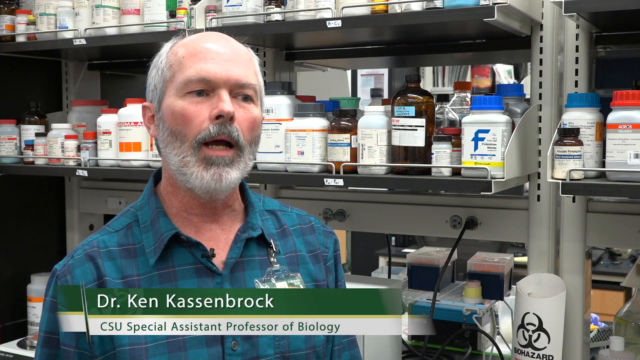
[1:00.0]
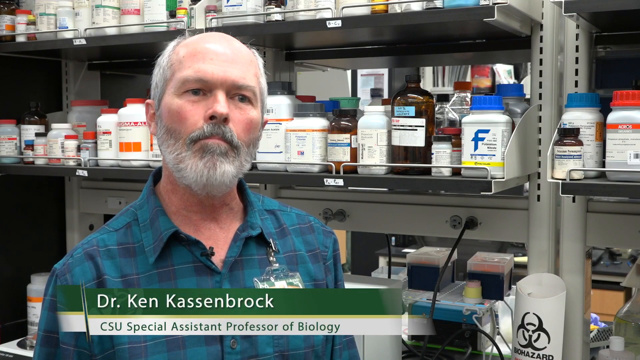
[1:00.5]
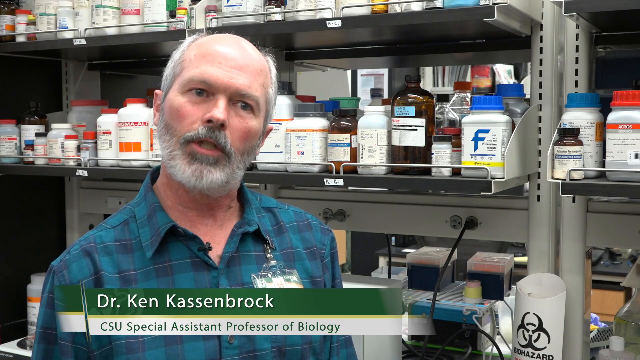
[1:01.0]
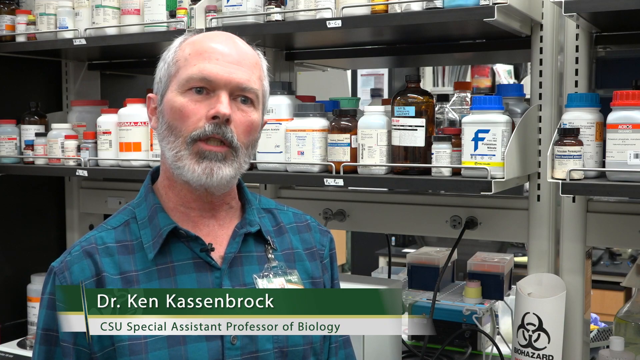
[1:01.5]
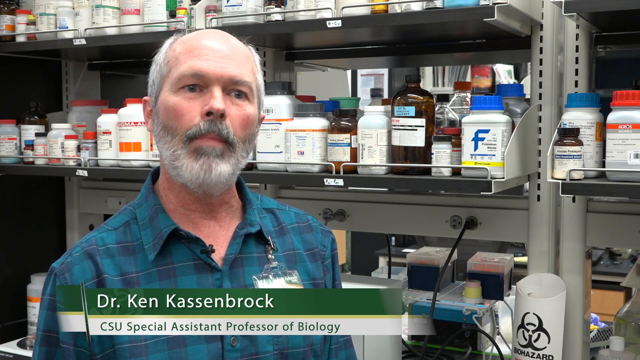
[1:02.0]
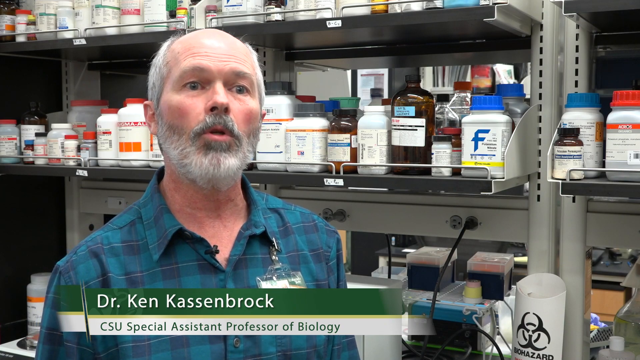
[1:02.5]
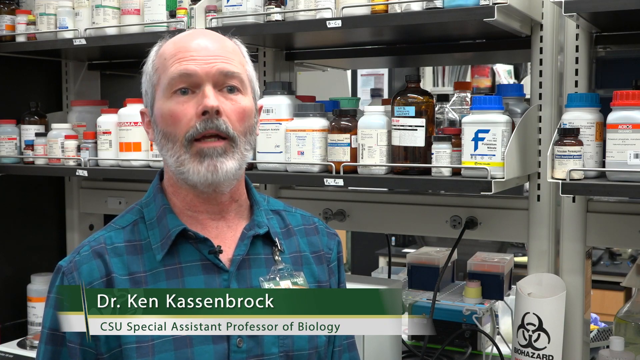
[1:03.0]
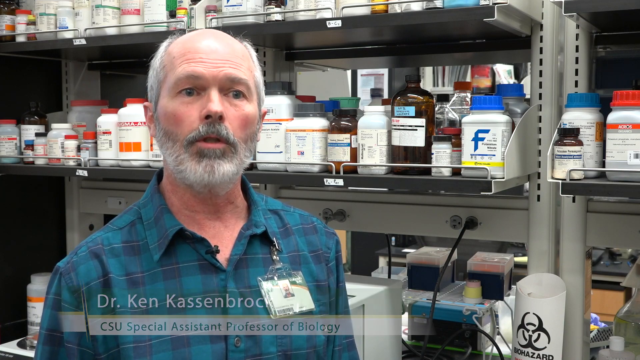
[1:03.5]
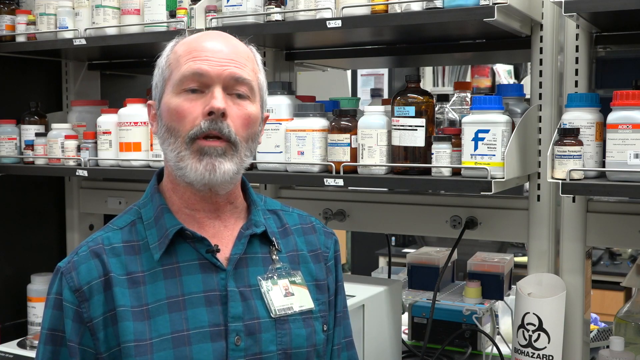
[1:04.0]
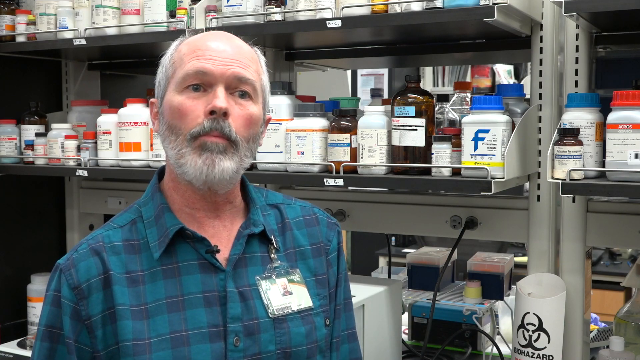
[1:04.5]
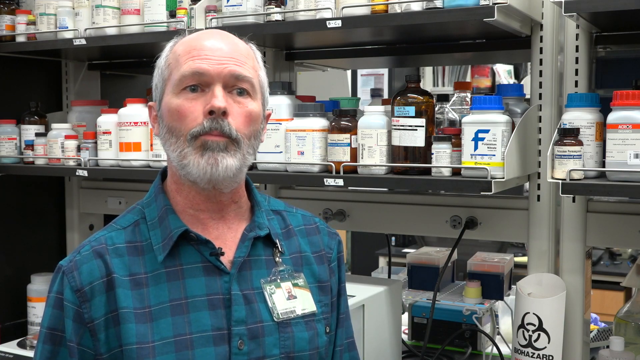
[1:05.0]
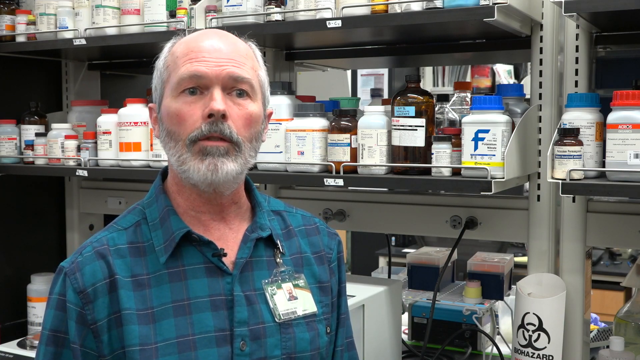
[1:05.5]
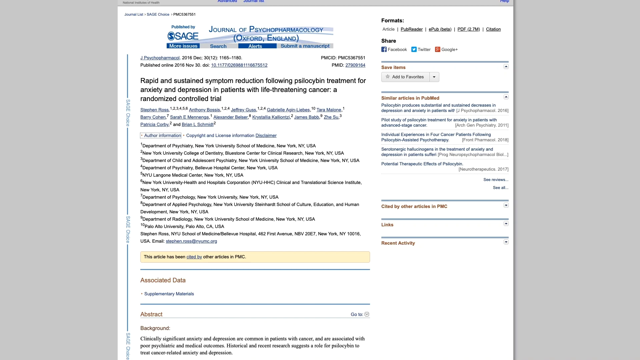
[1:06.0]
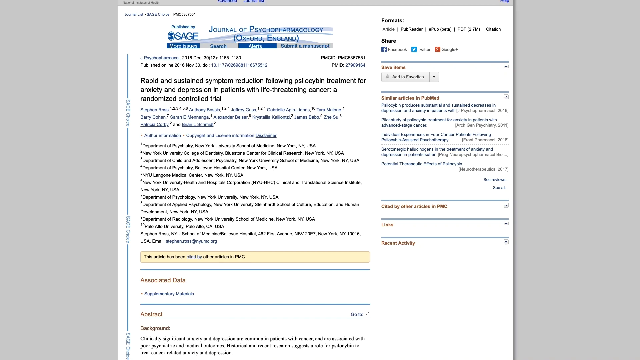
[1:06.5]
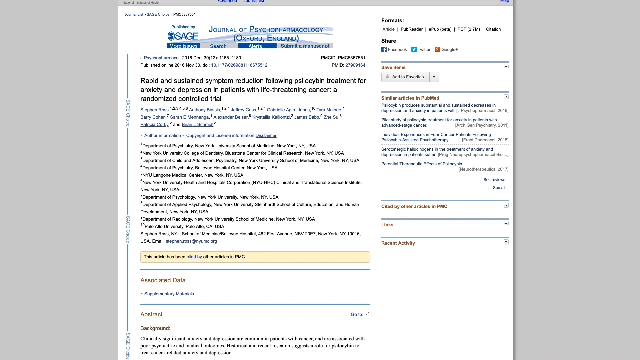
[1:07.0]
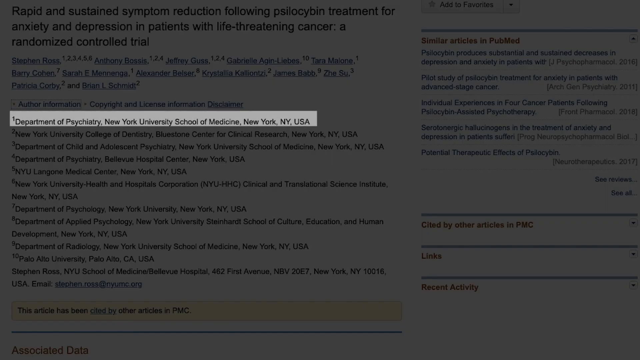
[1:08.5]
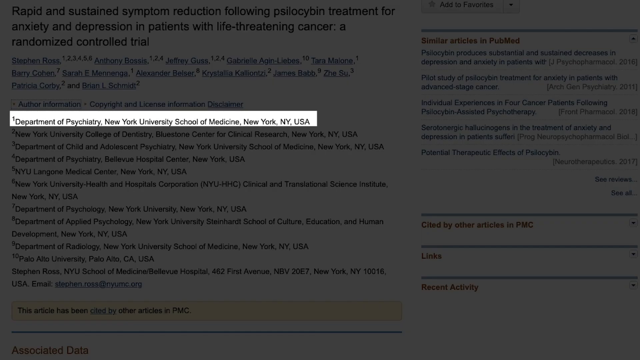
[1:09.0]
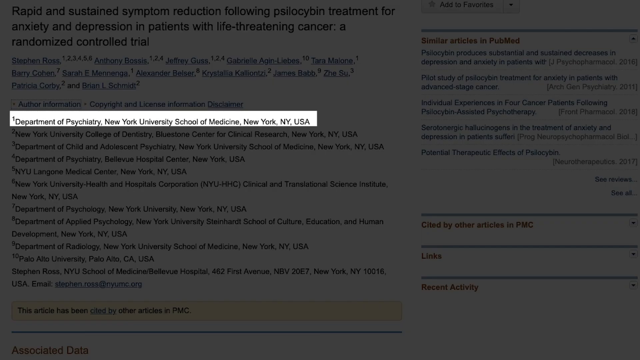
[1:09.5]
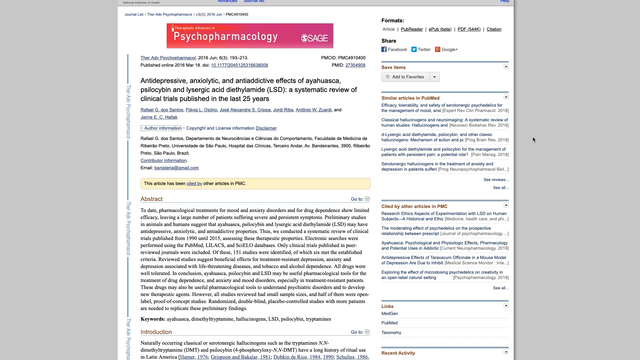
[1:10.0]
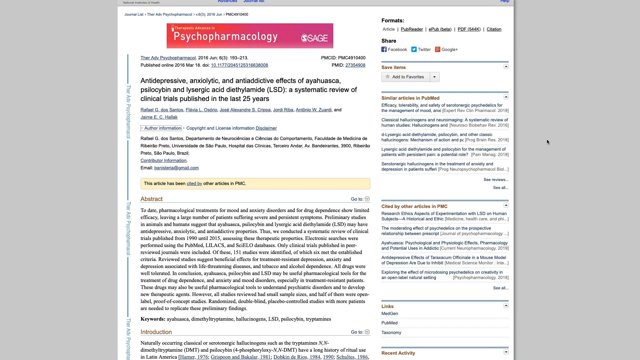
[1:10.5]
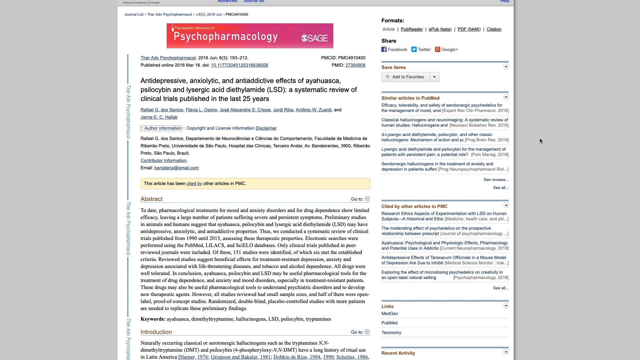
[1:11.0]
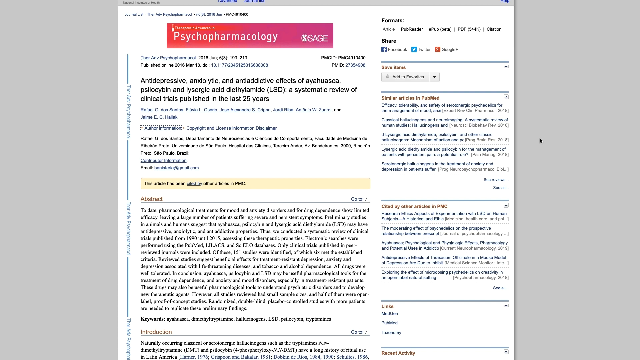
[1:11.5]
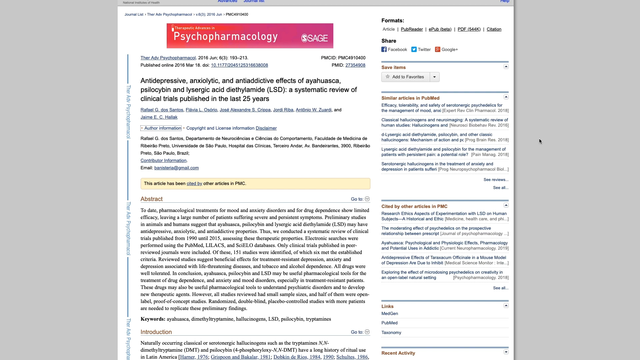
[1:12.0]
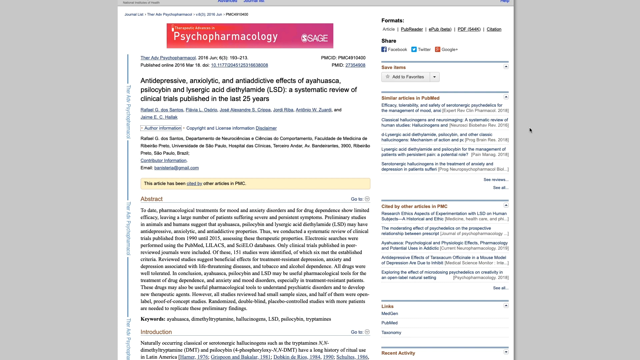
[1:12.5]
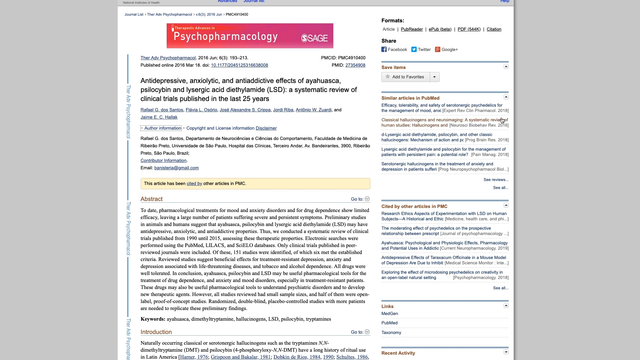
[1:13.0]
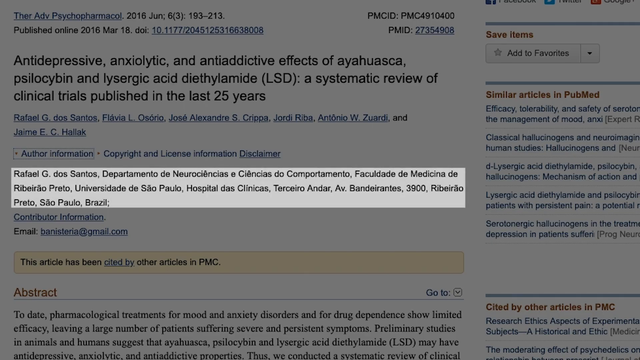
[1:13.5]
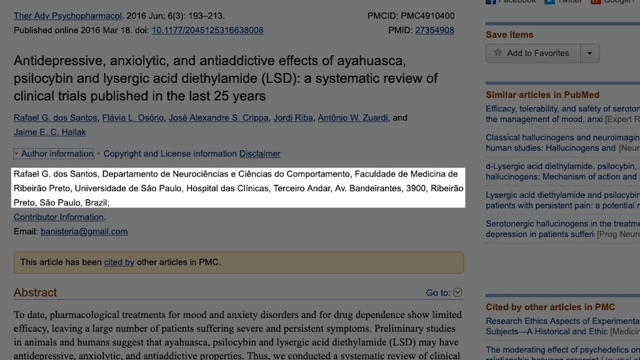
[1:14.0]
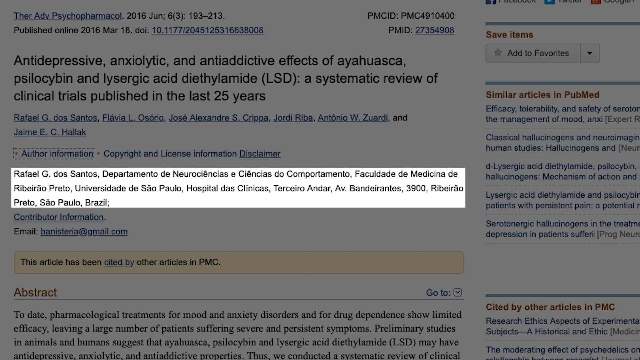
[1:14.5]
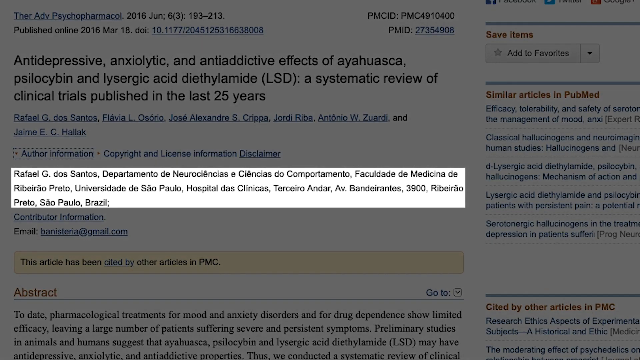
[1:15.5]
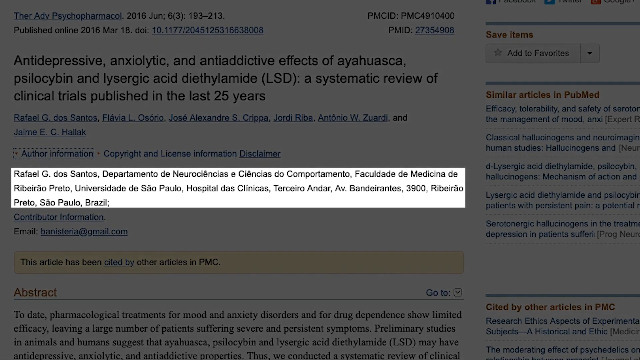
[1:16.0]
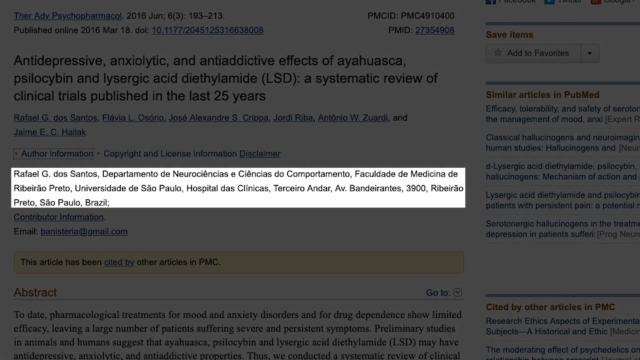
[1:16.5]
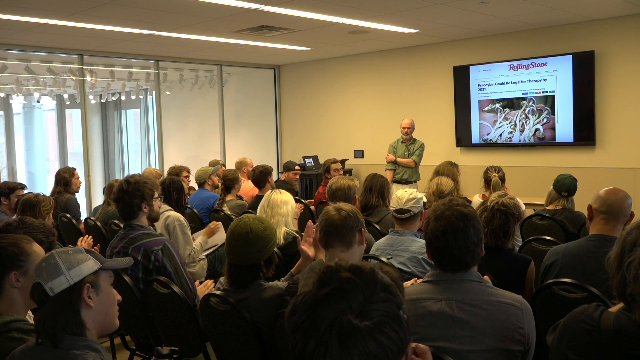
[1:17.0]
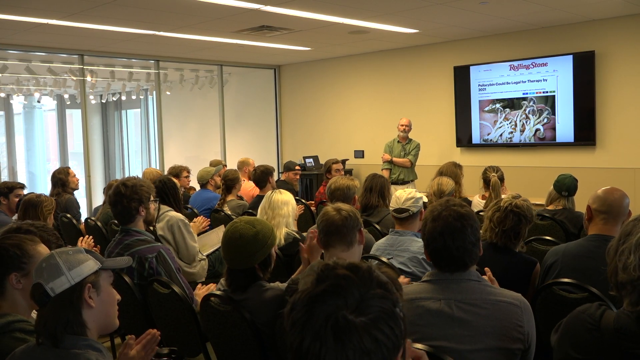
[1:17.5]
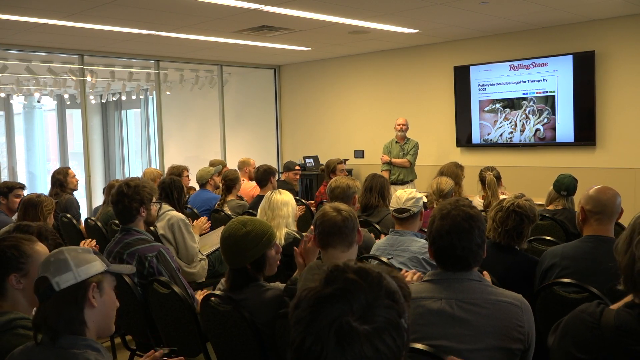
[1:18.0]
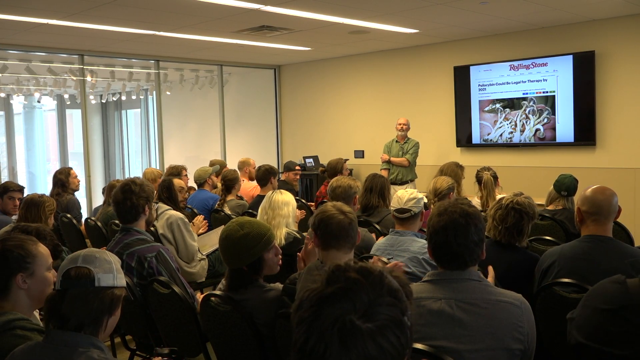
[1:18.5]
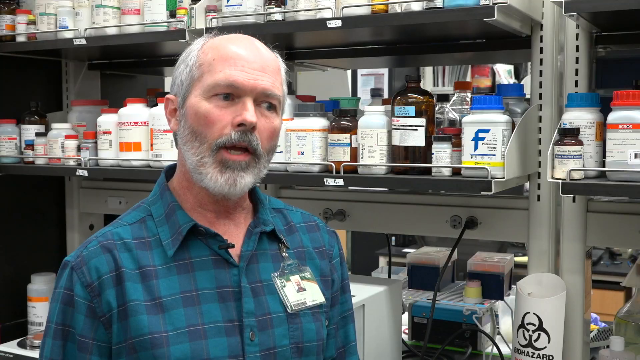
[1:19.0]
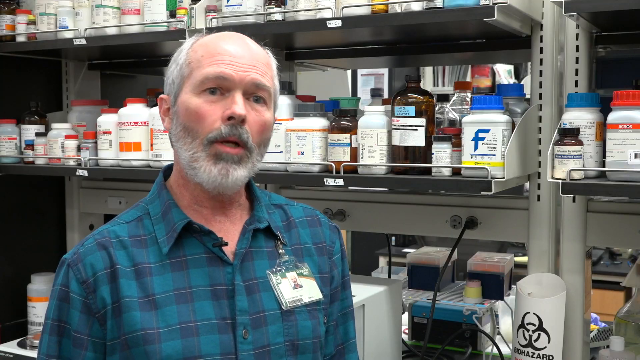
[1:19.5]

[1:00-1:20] Dr. Ken Kassenbrock, a CSU professor of biology labeled "Special Assistant Professor of Biology", speaks in what looks like it may be his lab, with a lot of bottles and containers behind him. A page then appears from the Journal of Psychopharmacology from Oxford, England, titled "rapid and sustained symptom reduction following the psilocybin treatment for anxiety and depression in patients with life-threatening cancer, a randomized controlled trial". One portion is highlighted: "Department of Psychiatry, New York University School of Medicine, New York, New York, USA". Further text on the article mentions antidepressive and anti-addictive effects, and the authors and where the study was done are also highlighted. The video then returns to the class where Dr. Kassenbrock was speaking, and everyone is applauding him.